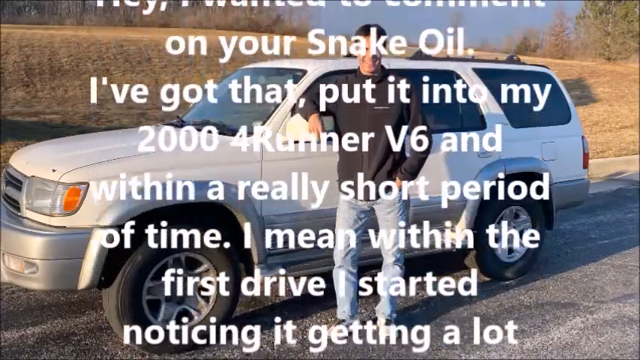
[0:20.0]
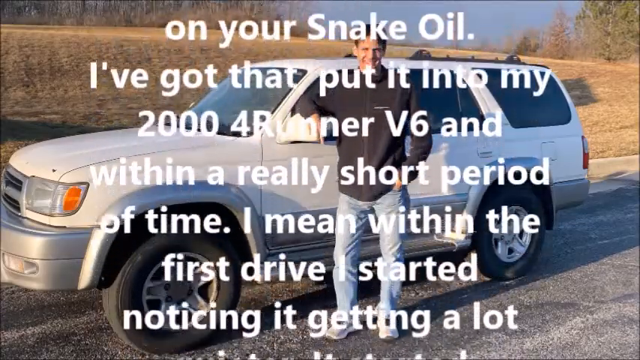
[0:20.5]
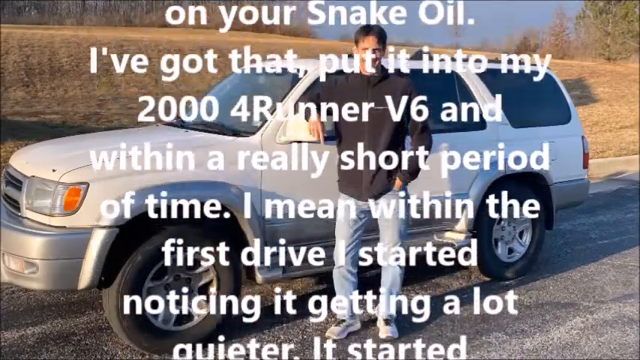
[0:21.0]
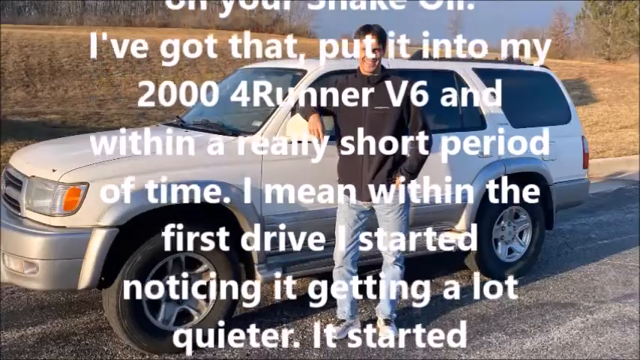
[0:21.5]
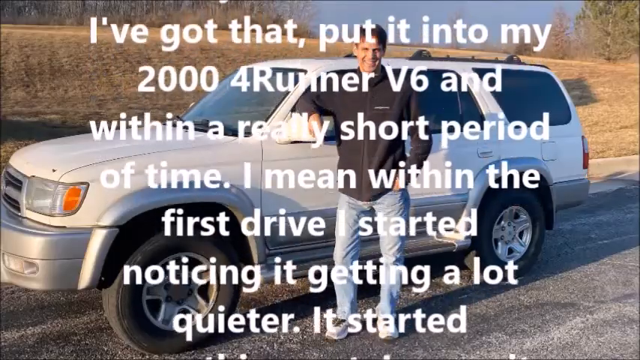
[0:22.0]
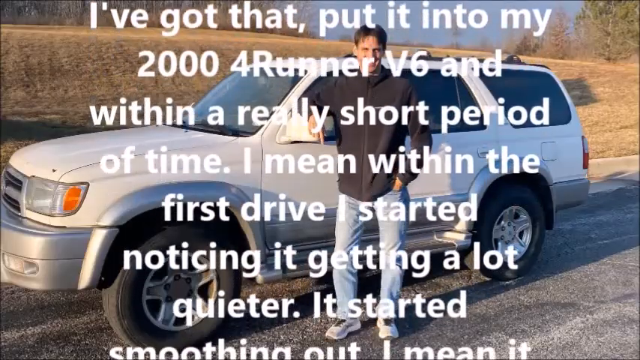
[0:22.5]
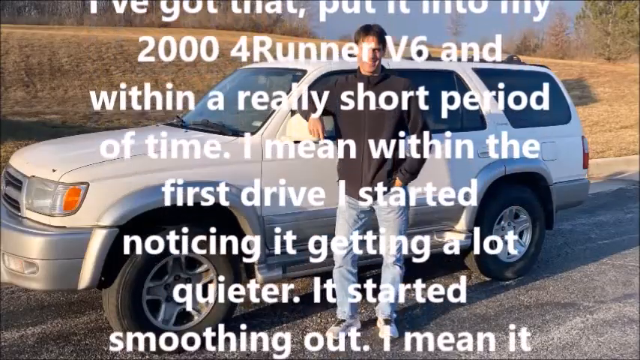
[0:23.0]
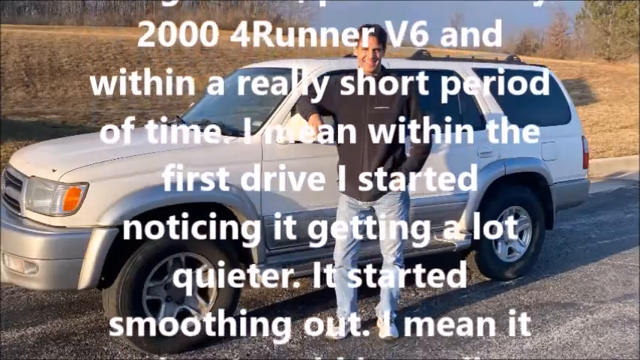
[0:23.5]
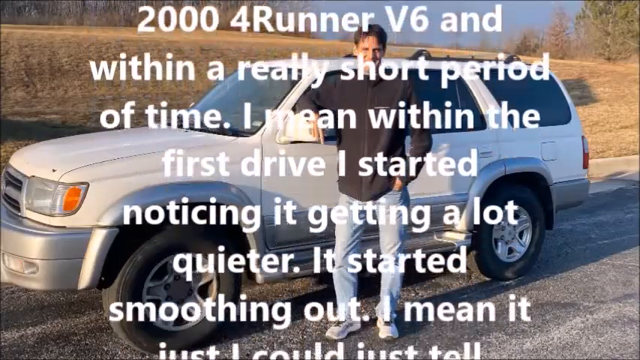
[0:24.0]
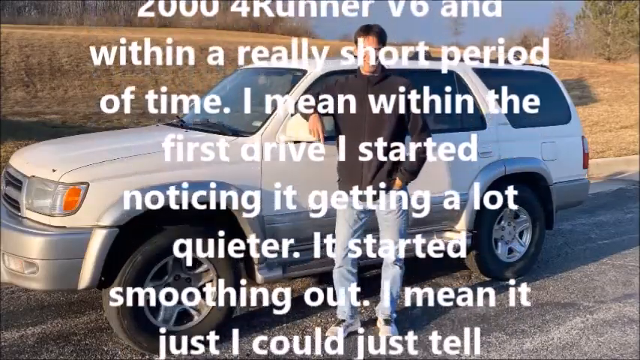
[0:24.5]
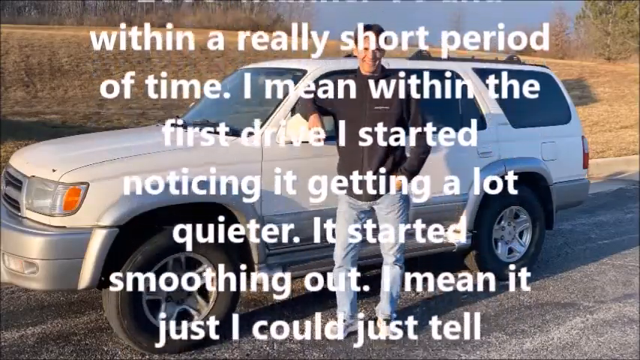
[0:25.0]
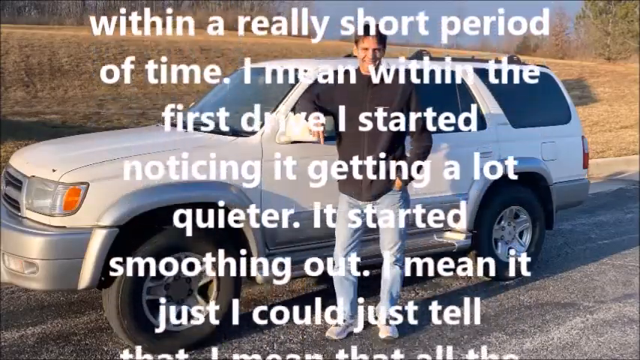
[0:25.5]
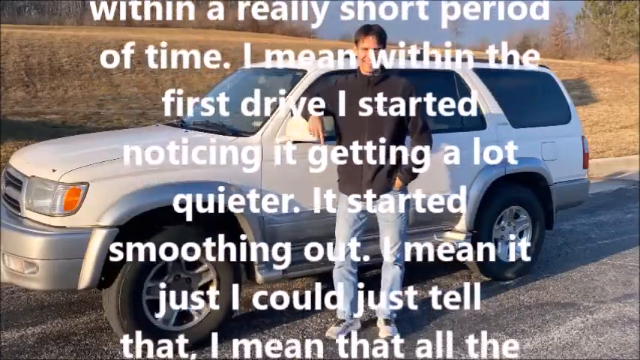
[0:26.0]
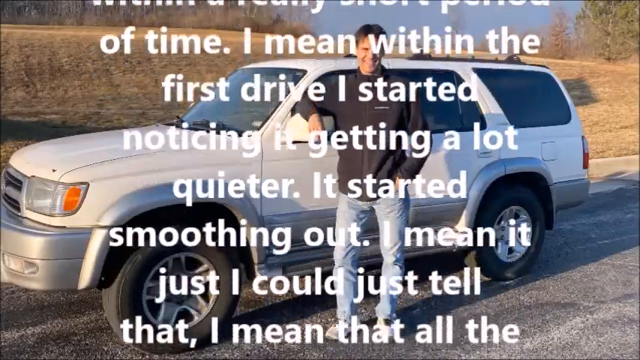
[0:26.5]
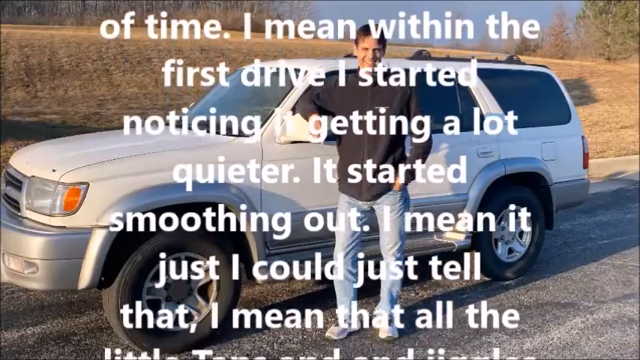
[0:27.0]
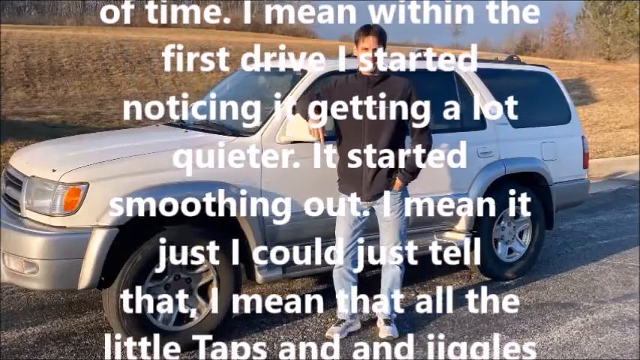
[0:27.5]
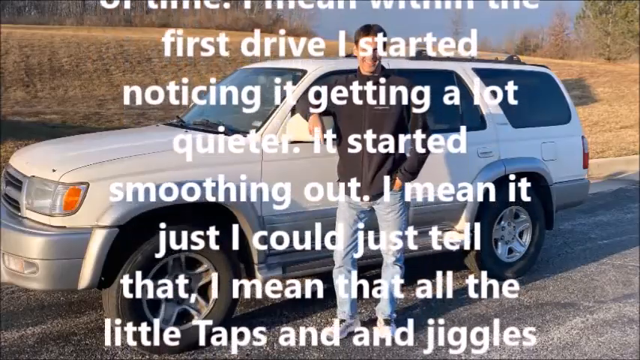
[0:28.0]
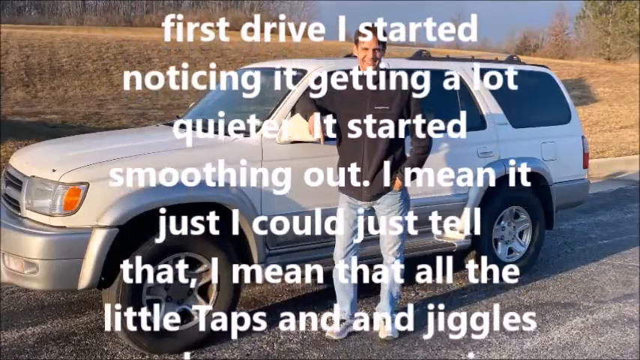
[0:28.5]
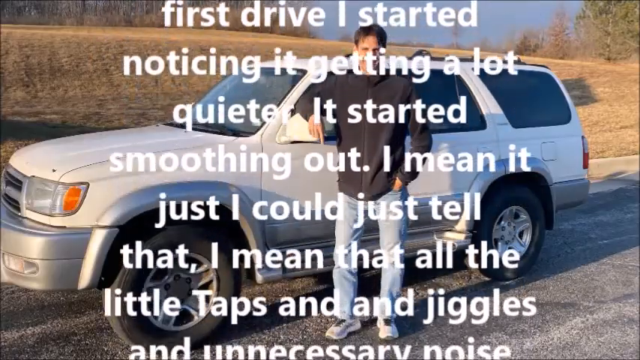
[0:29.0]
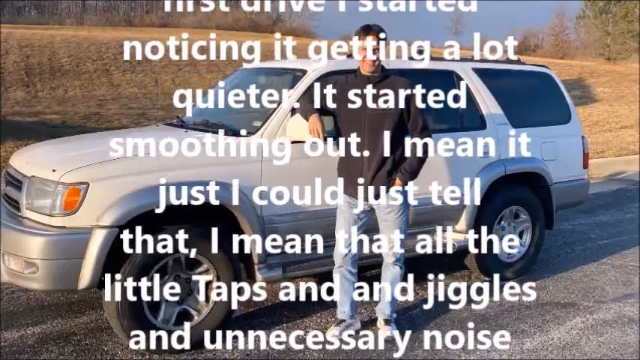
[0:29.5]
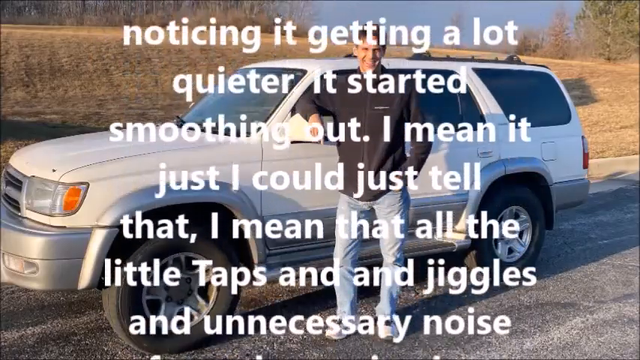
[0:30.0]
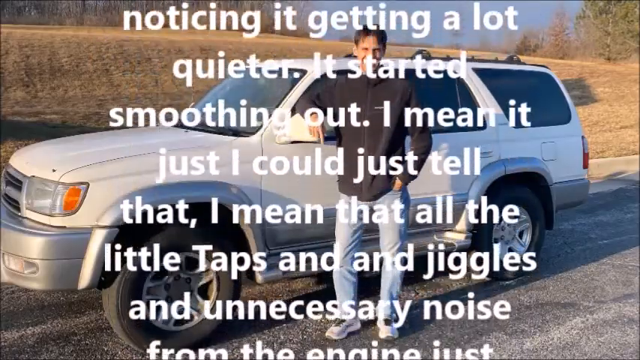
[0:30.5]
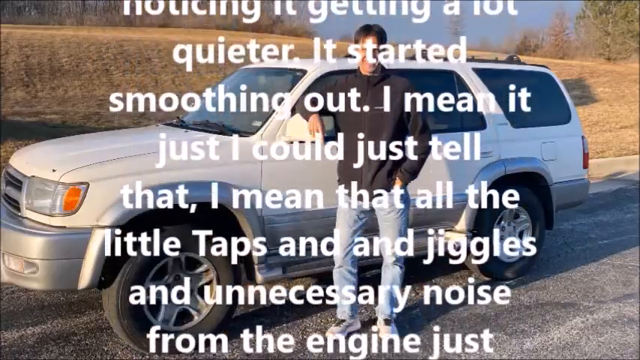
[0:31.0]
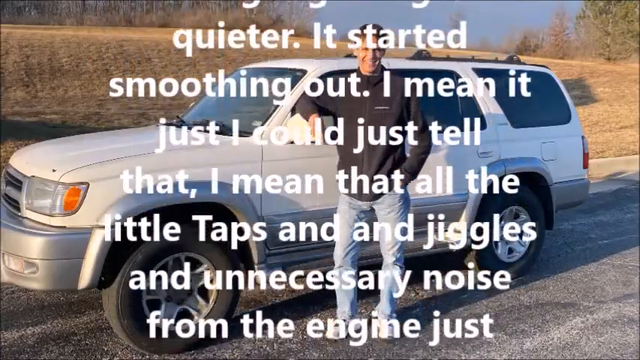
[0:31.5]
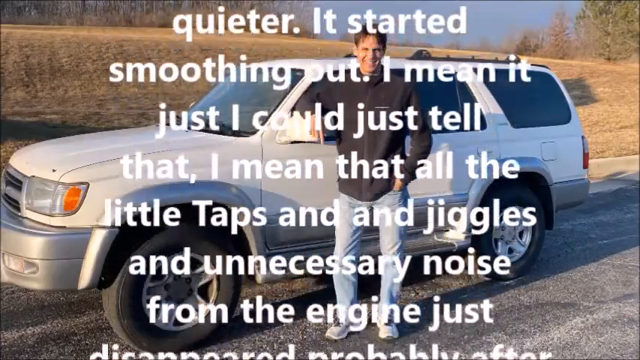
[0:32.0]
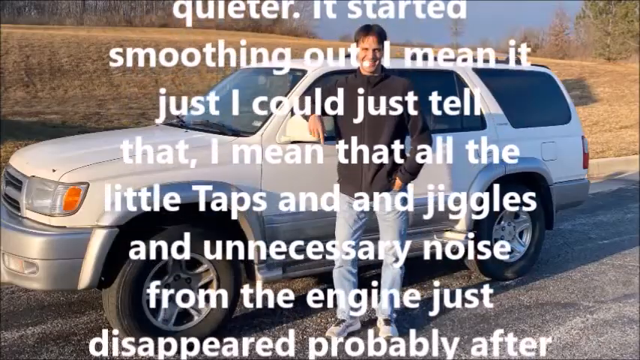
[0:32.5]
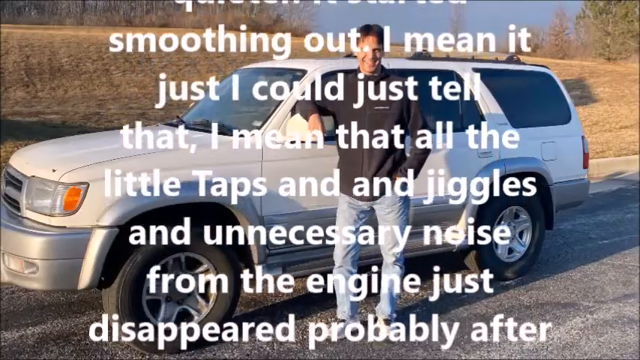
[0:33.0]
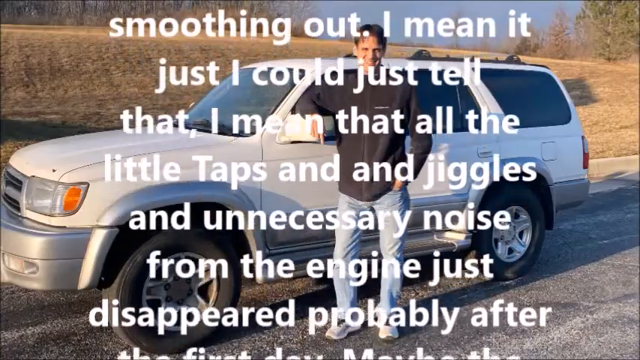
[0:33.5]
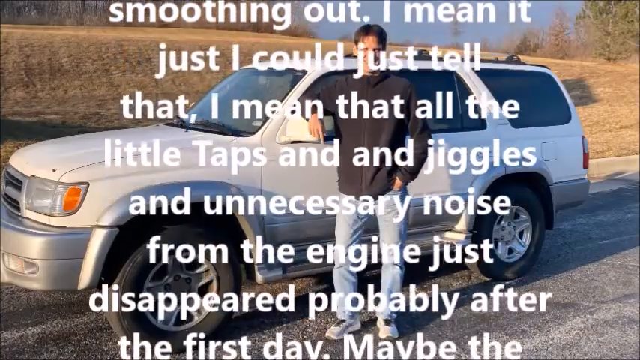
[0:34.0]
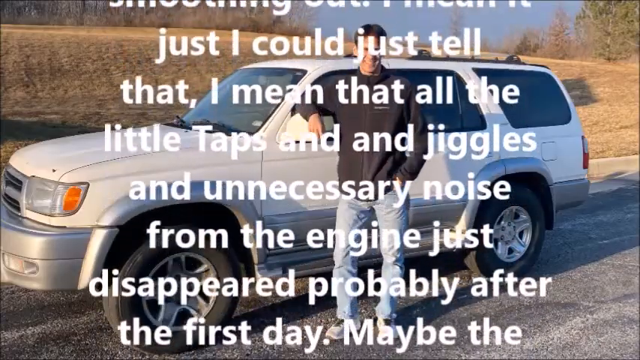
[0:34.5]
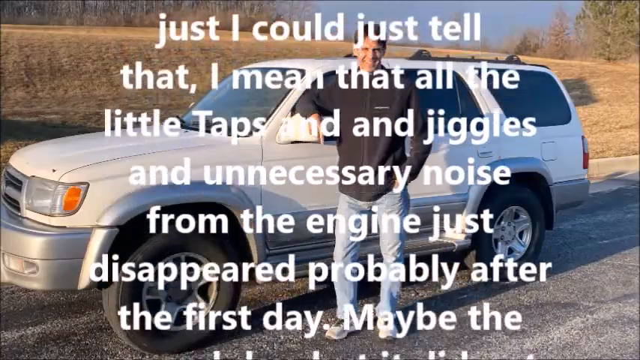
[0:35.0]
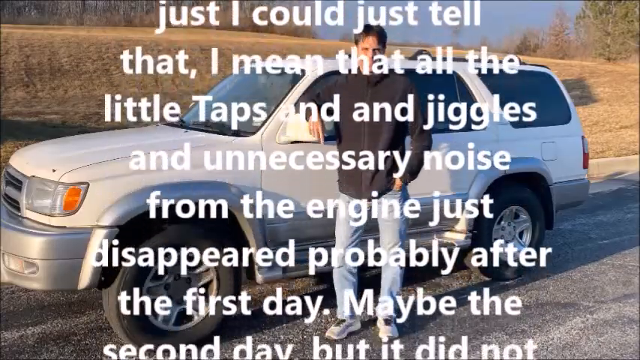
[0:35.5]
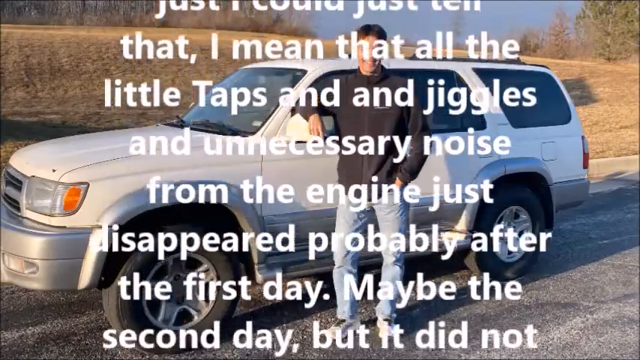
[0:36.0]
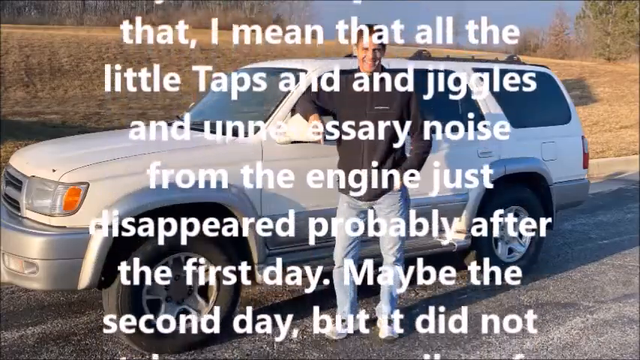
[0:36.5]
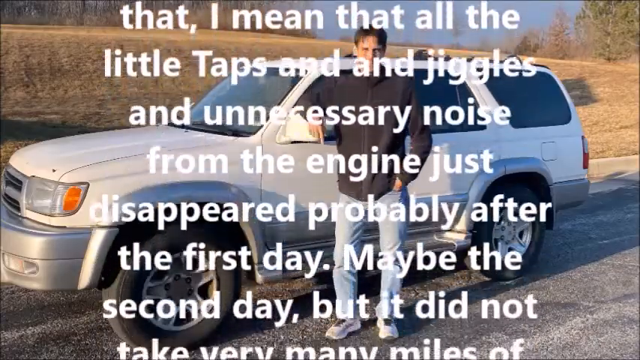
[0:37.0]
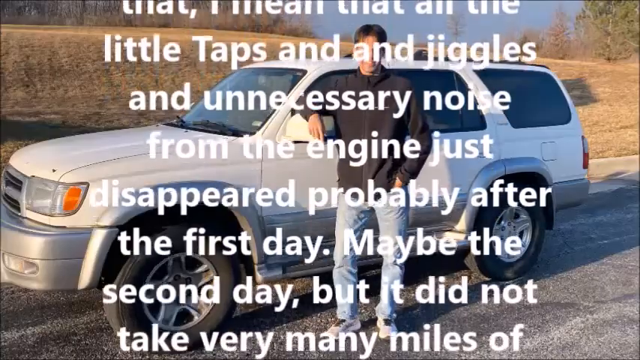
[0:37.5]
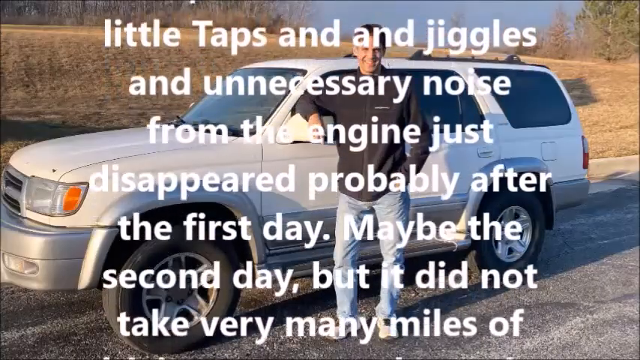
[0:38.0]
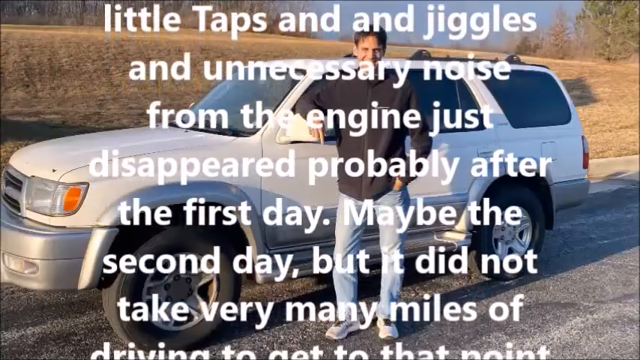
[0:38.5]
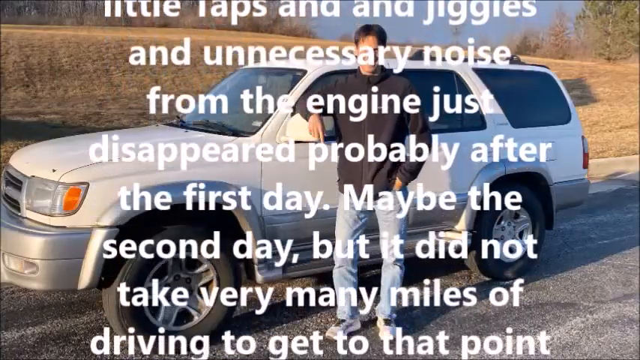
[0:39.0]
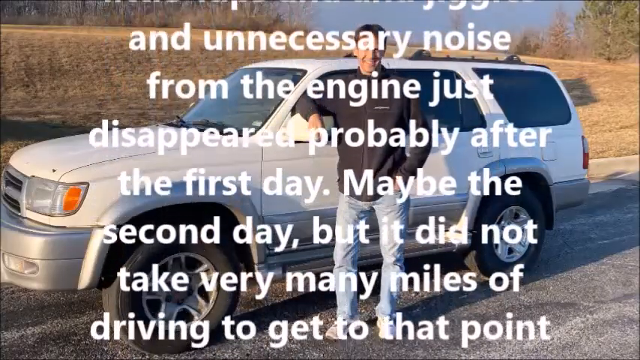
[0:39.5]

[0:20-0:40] A man stands in front of a white SUV, wearing blue jeans and what looks like a black jacket with a zipper in the front. He has brown hair and is smiling. The ground is either rough asphalt or gravel, something like a road or a parking lot. Behind the SUV is a hill with short-cut brown grass, and along the top of the ridge are trees, maybe a small forested area, with blue sky visible behind them. White text scrolls from the bottom to the top across the front of the screen, beginning: "I've got that, put it into my 2004 V6 and with a really short period of time, I mean within the first drive, I started noticing it getting a lot quieter. It started smoothing out." It continues with "all the little taps and jiggles and unnecessary noises from the engine just disappeared, probably faster than the first day, maybe the second day, but it did not take".